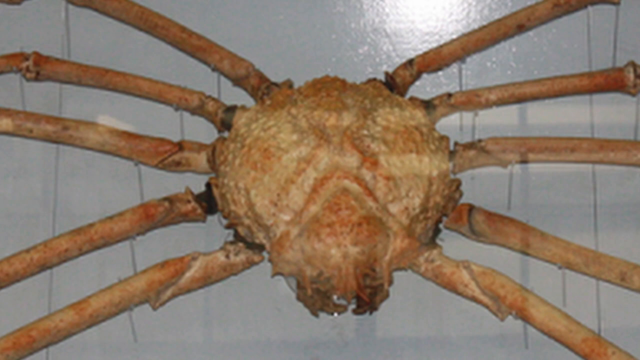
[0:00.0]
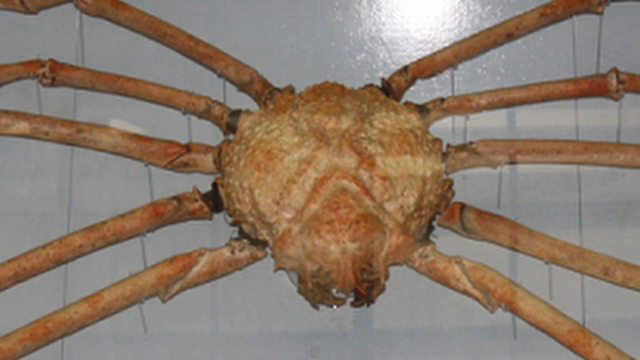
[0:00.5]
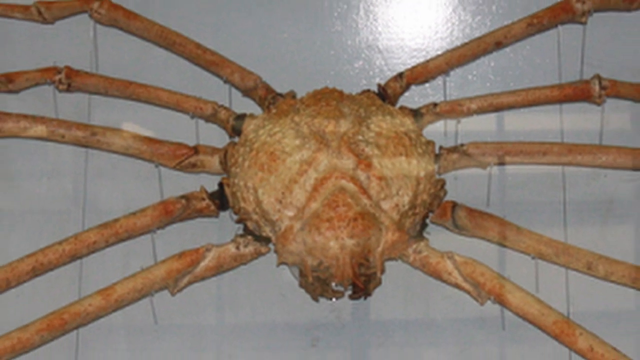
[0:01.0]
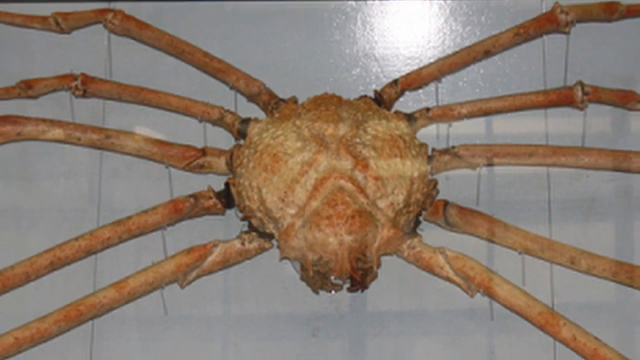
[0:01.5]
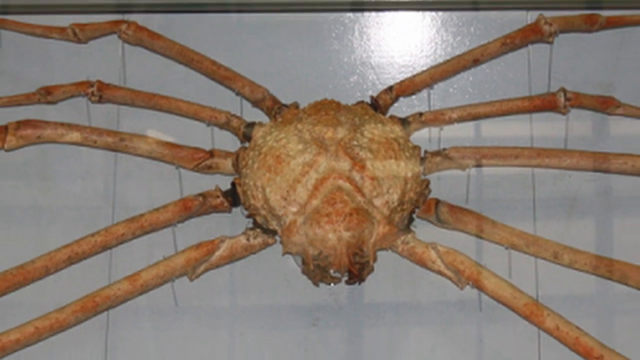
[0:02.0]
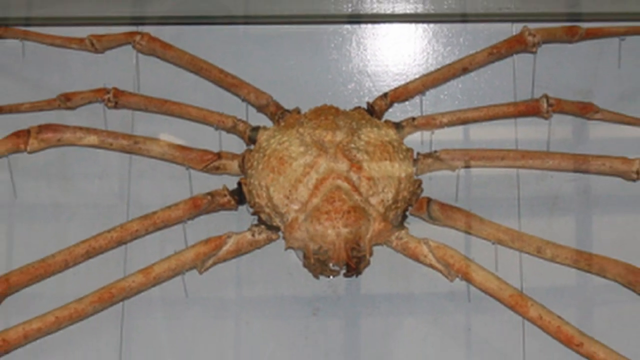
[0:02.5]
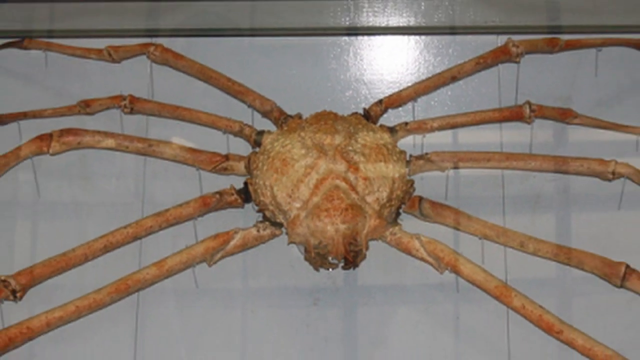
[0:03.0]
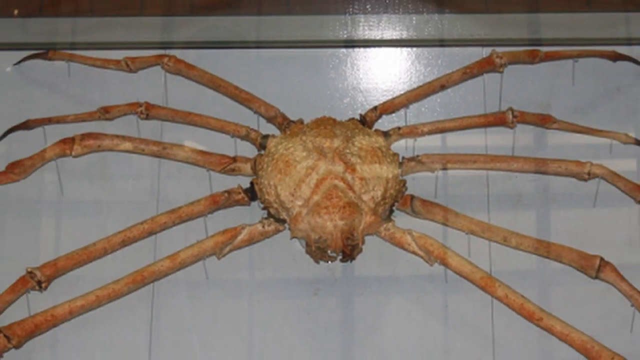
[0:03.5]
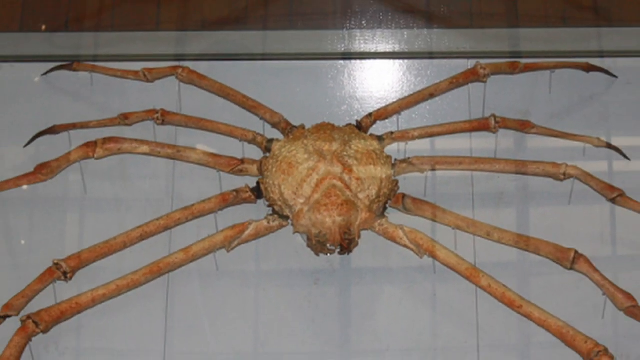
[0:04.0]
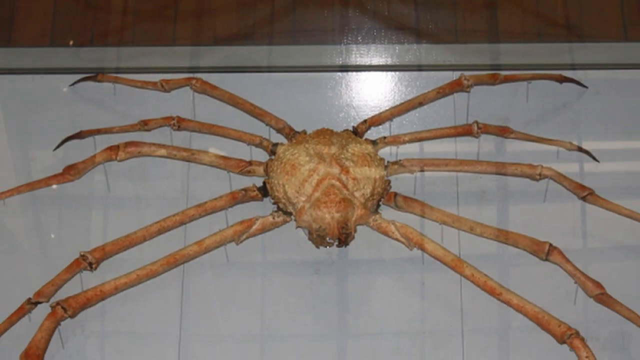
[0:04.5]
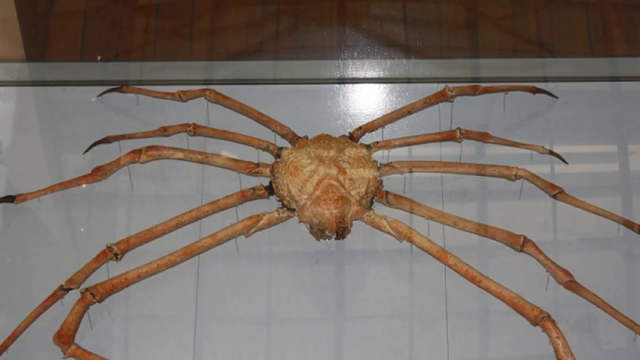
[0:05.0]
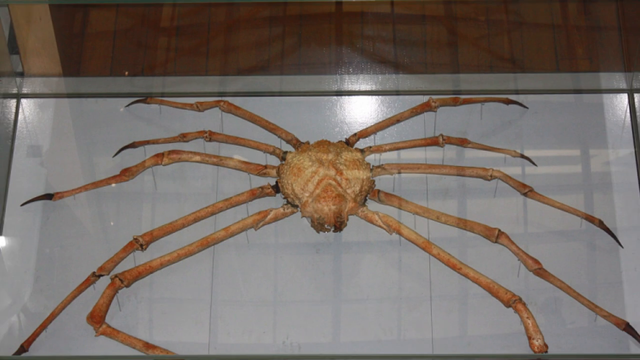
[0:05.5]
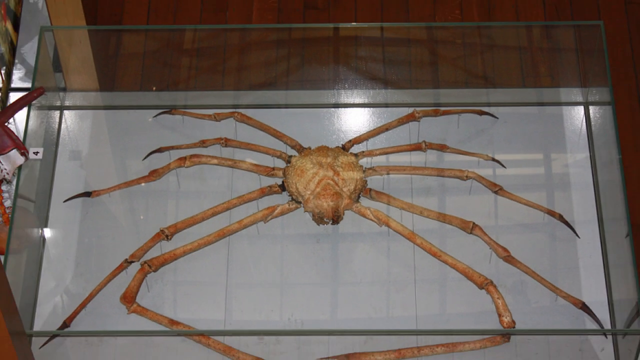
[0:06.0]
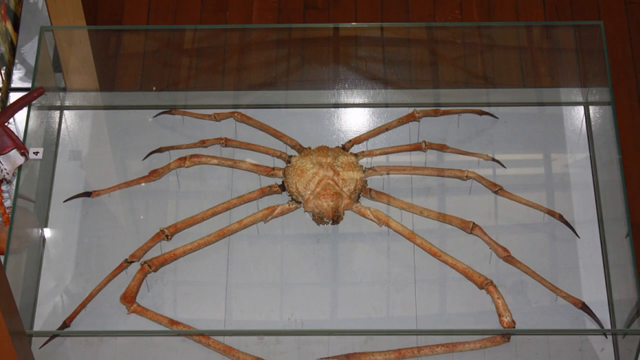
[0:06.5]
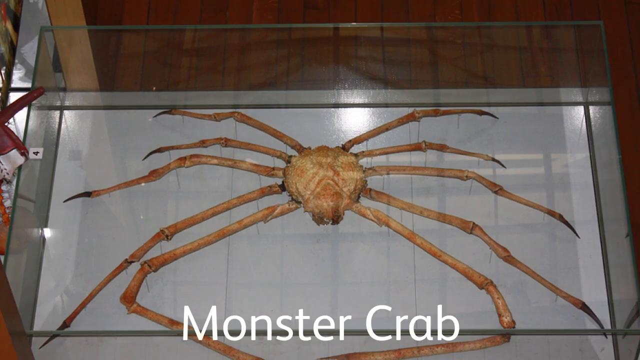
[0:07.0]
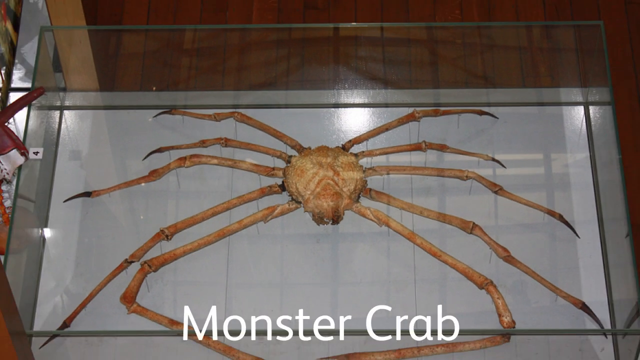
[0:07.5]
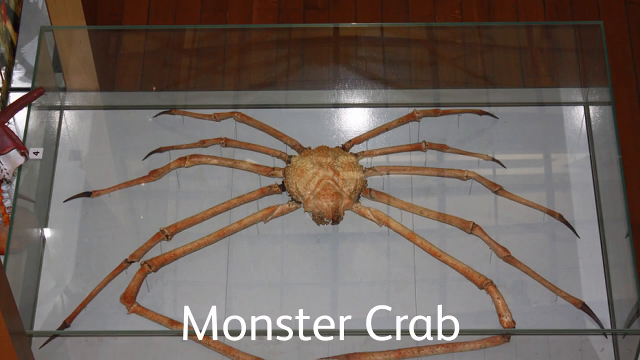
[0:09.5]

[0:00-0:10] A crab appears, with legs on each side. At first it looks like it may be in a cage or something, and it does not seem to be moving. Its hard shell is visible immediately, with five legs on one side and five legs on the other. As more of it comes into view, it looks like it is on a tray and is being measured. It turns out to be in a case, and text below reads "monster crab."